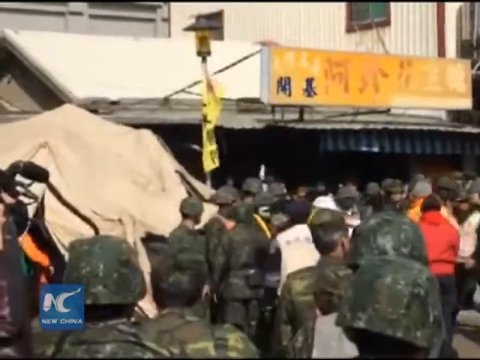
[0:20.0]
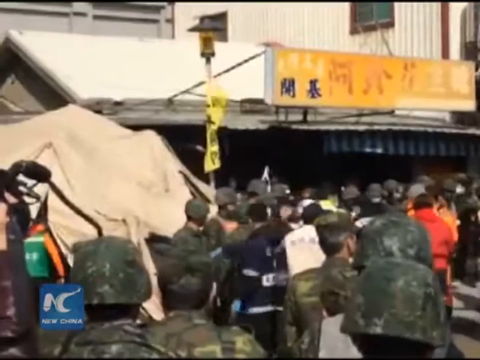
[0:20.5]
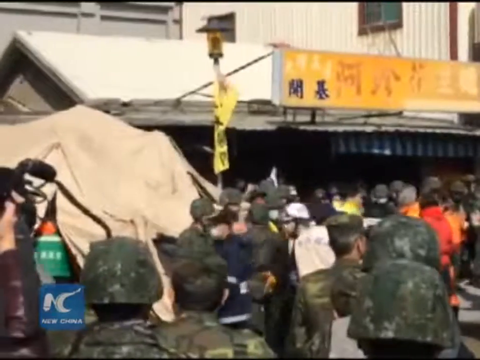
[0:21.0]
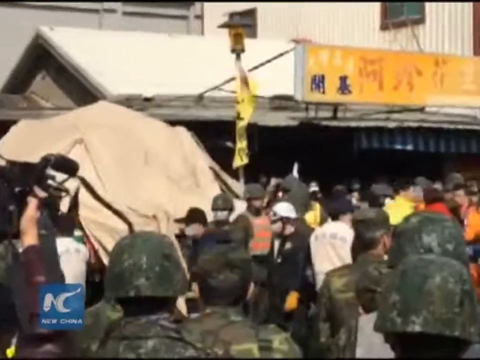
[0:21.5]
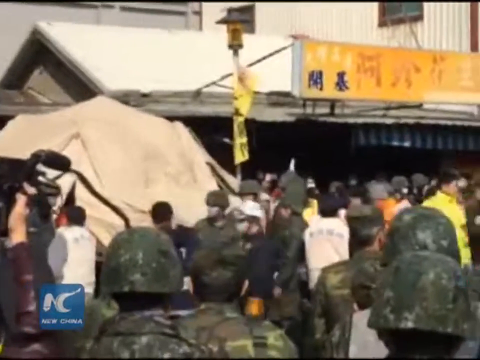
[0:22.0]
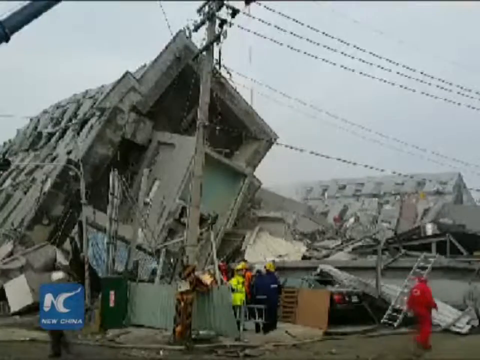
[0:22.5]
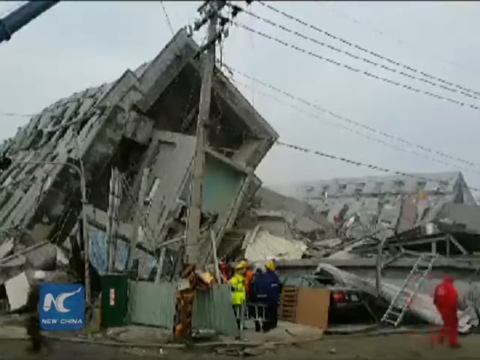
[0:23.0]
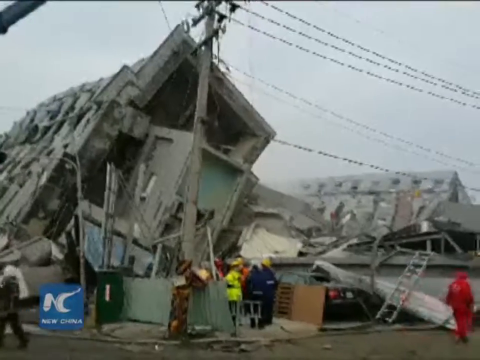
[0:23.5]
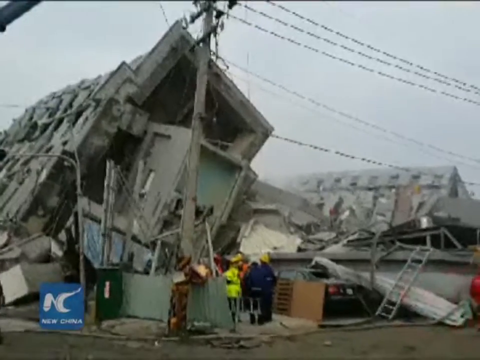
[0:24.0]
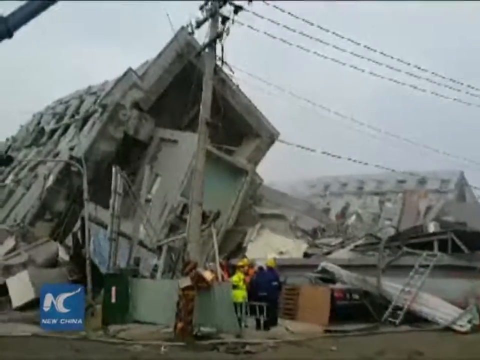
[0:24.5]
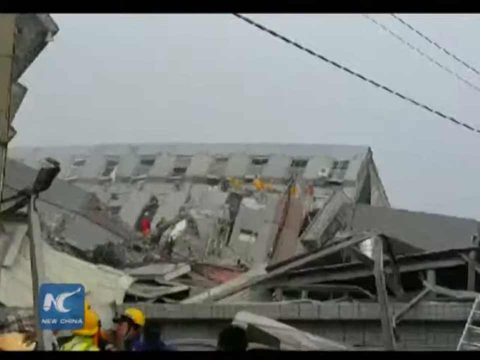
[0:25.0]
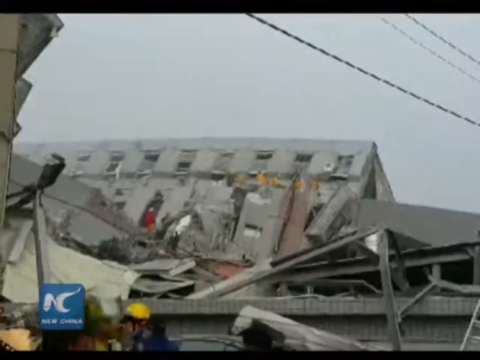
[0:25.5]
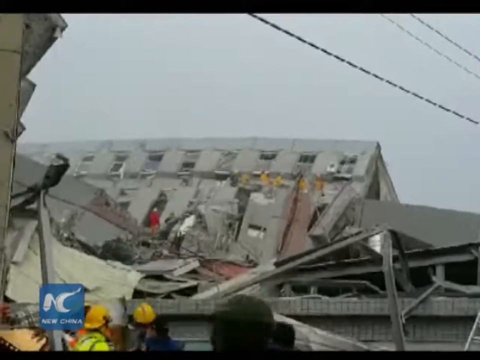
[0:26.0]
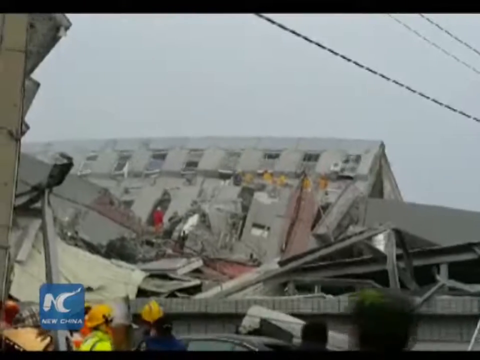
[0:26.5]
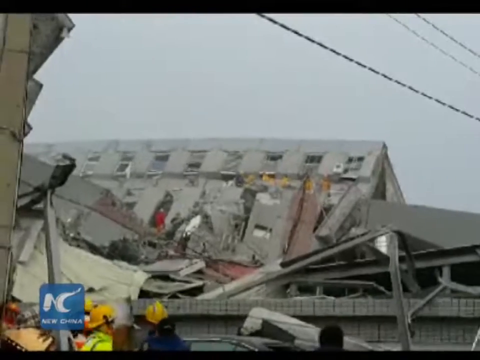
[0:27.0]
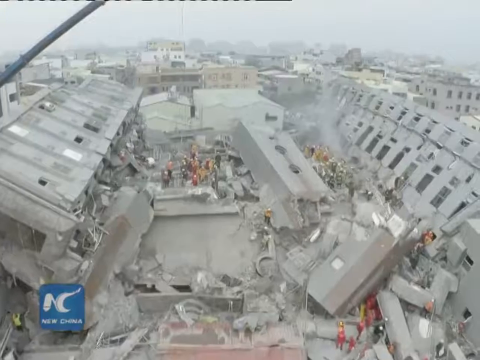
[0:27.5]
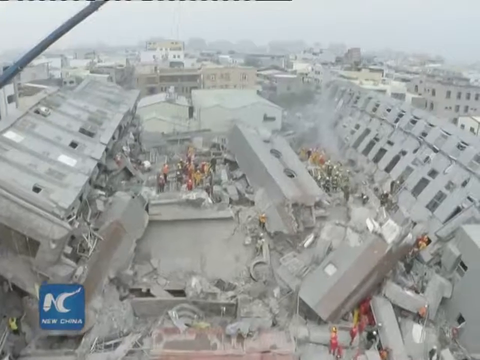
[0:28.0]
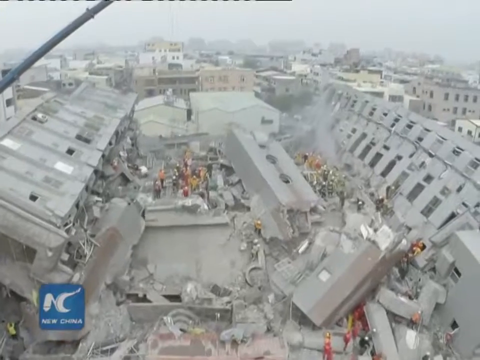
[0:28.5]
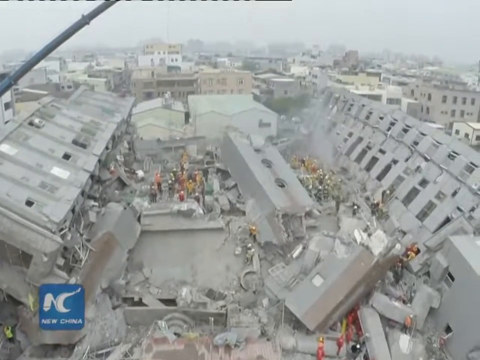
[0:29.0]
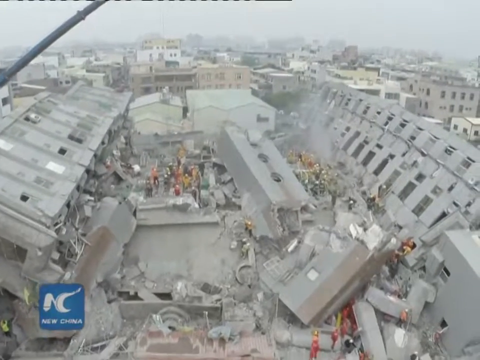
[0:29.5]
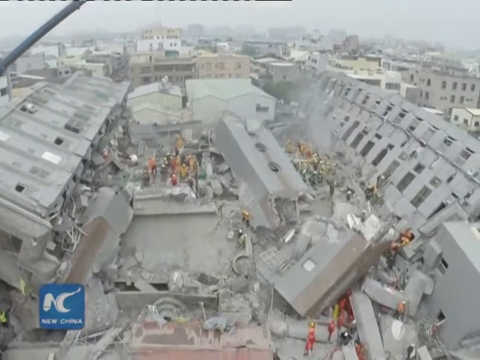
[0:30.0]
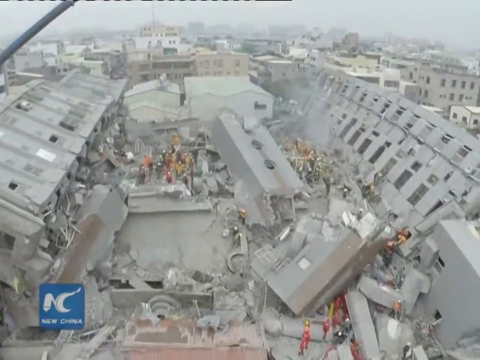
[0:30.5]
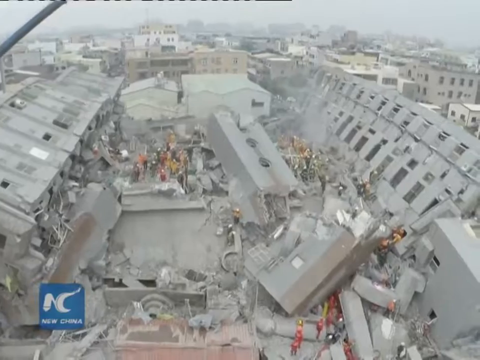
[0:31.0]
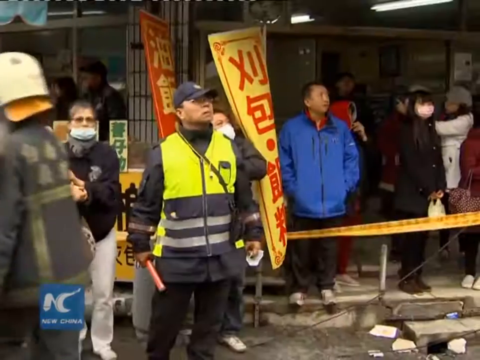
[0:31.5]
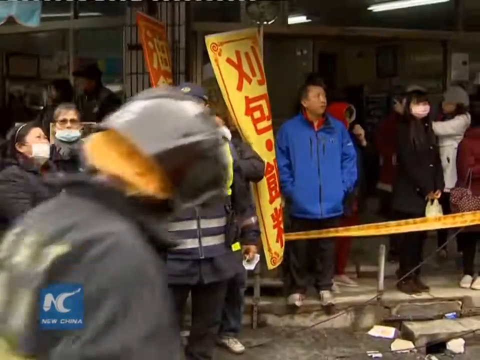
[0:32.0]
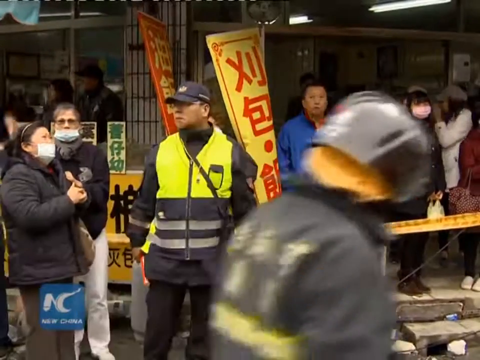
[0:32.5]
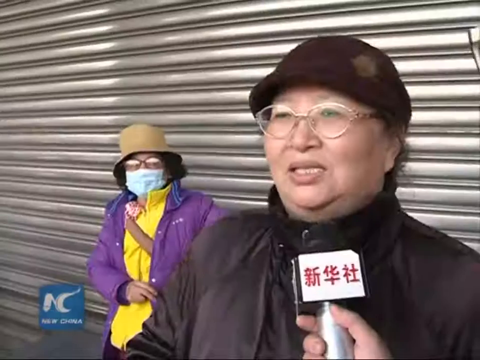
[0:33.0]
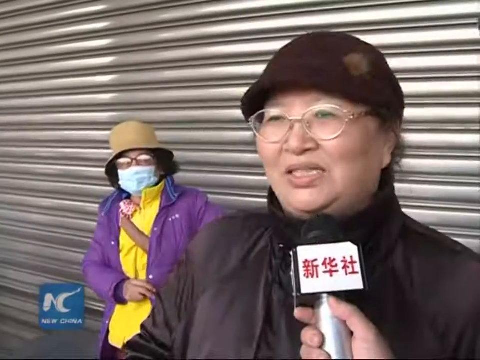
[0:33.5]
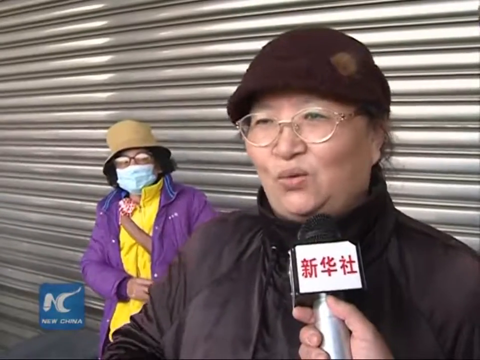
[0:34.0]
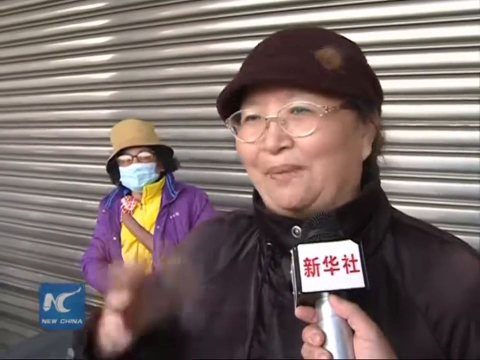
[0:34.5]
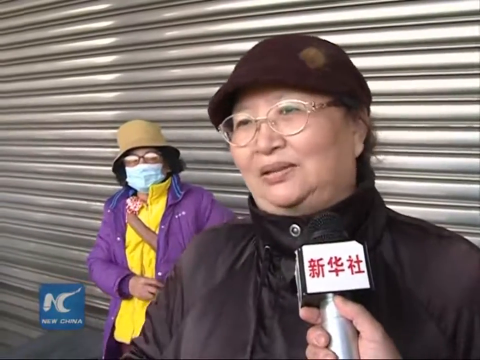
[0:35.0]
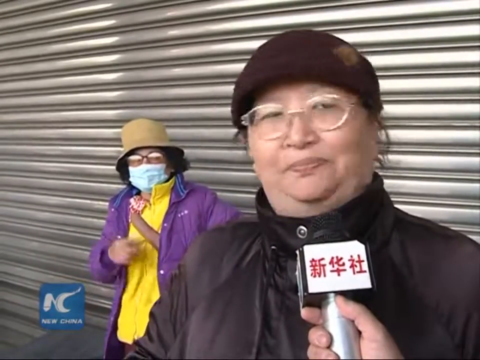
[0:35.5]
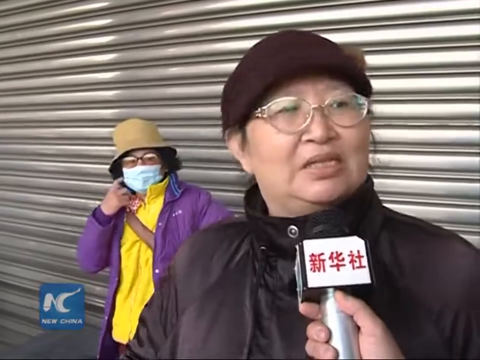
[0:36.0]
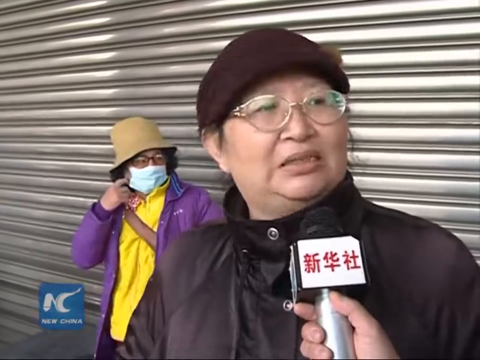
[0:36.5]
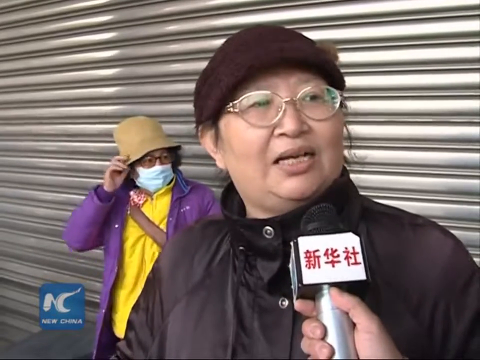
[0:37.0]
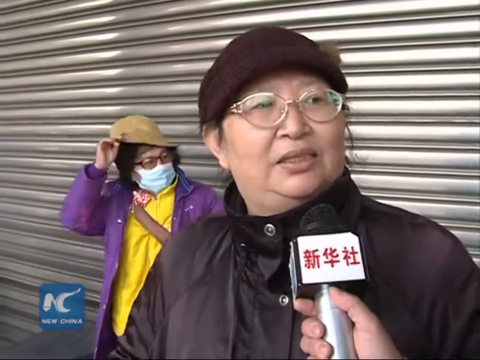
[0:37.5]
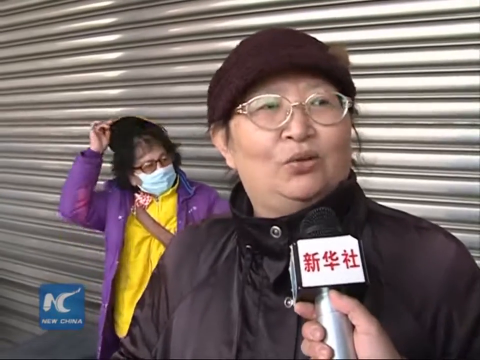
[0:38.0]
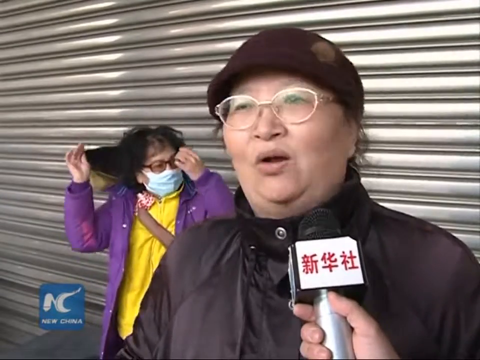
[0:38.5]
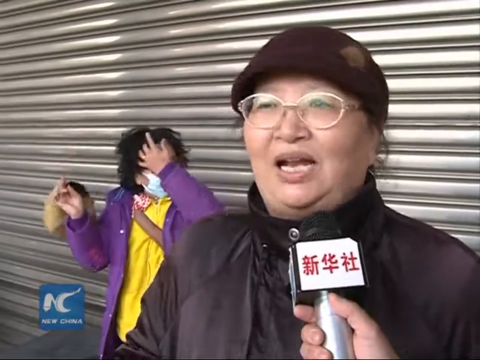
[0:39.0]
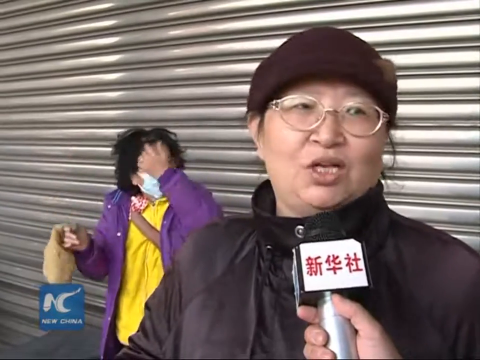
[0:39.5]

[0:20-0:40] A top side view shows a crowd gathered in front of a building with a yellow sign on it. Some of the people look like military officers in traditional camouflaged green helmets and uniforms, and what looks like a yellow flag is flickering in front of the building. A collapsed building then appears, slanted at an angle, with a power pole and some cables on top of it, in front of the building. A ladder is in the bottom right corner of the screen, and a man in a pink overall walks away from view. A group of people seems to be in front of the collapsed building, one of them in a yellowish-green visibility vest; they are probably emergency responders. Next is what seems to be the right side of the collapsed building, with what seems to be another collapsed building beside it. Passers-by walk across the screen while emergency responders are in front of the house. An individual appears to be standing on top of the rubble, and some power cables are partially visible in the top right corner. A view of a larger portion of the collapsed building follows, with many emergency responders standing in the middle of the screen. A close shot then shows a group of people standing in front of what looks like a store, with a man in a visibility vest and a face cap in front of it and other people in face masks standing beside him. An individual, probably an eyewitness, gives an interview, wearing transparent glasses, a dark brownish and reddish cap, and what looks like a winter jacket. Behind them stands a woman in a purple jacket, a face mask, a light brown hat and glasses. The woman removes her hat, revealing her dark hair.